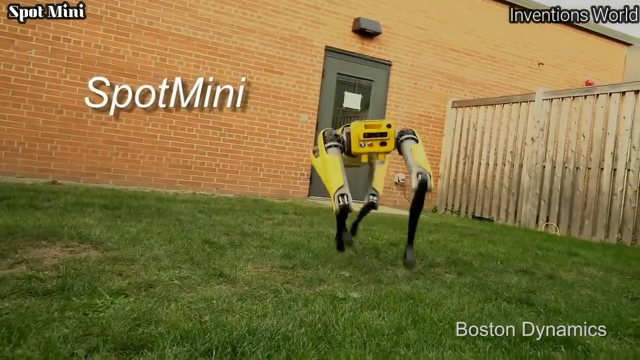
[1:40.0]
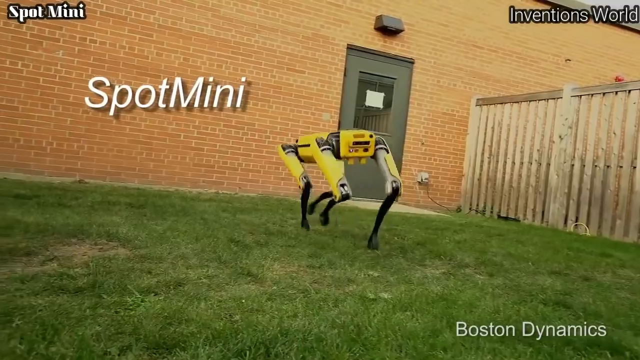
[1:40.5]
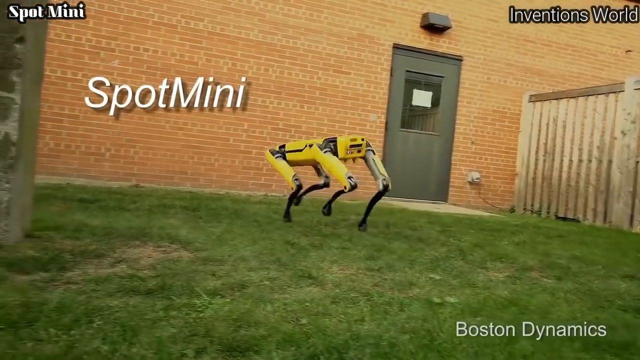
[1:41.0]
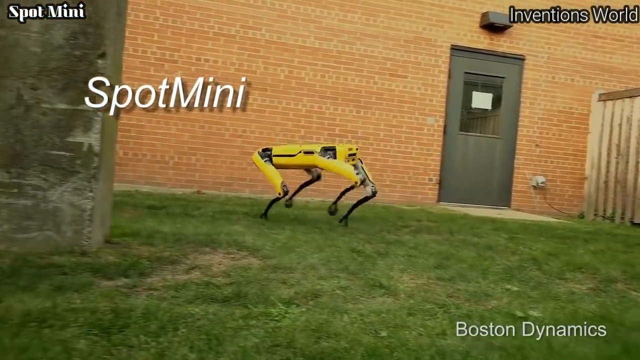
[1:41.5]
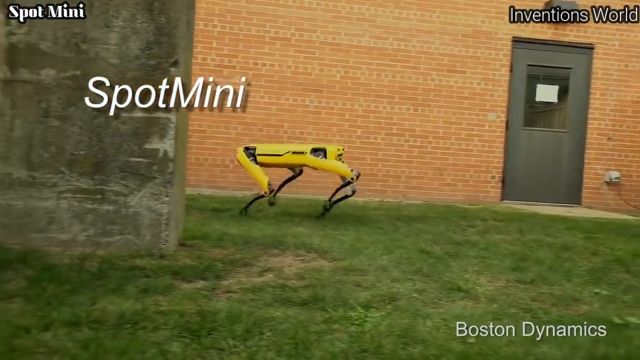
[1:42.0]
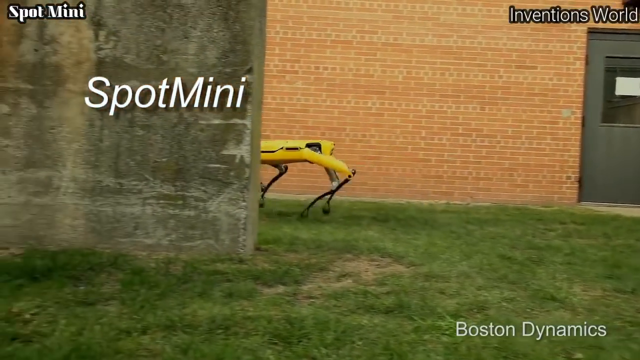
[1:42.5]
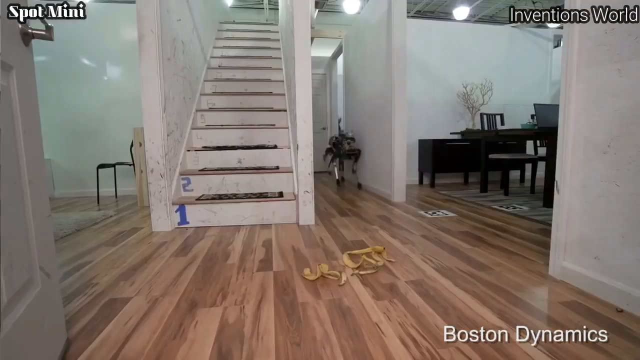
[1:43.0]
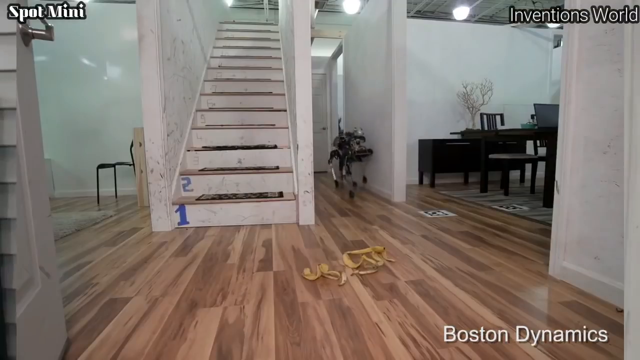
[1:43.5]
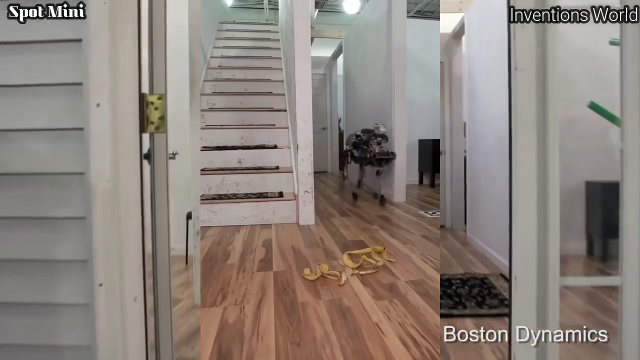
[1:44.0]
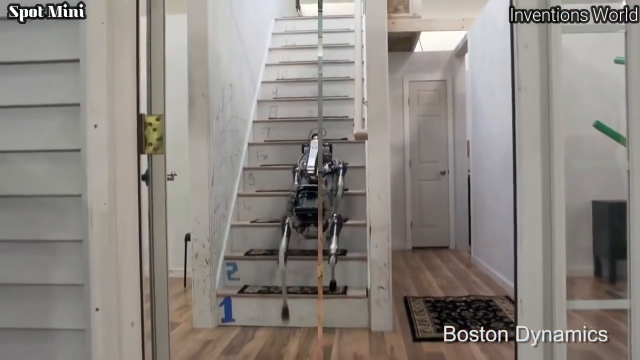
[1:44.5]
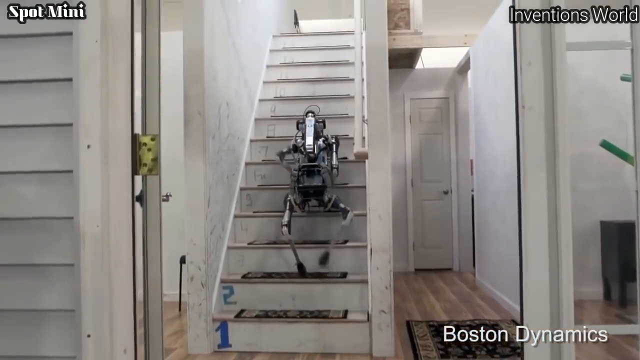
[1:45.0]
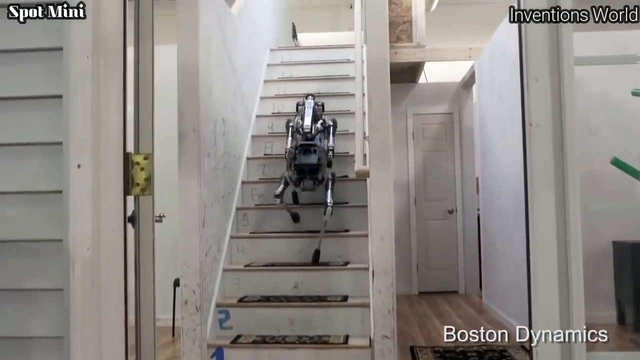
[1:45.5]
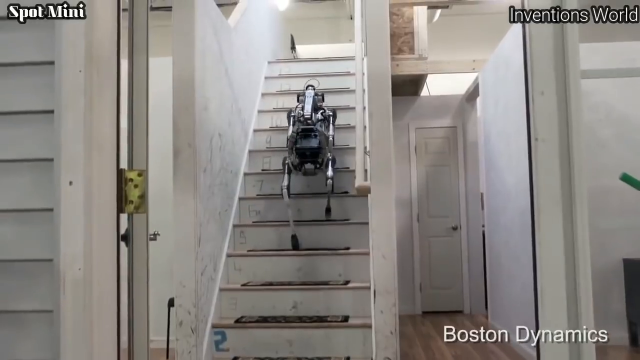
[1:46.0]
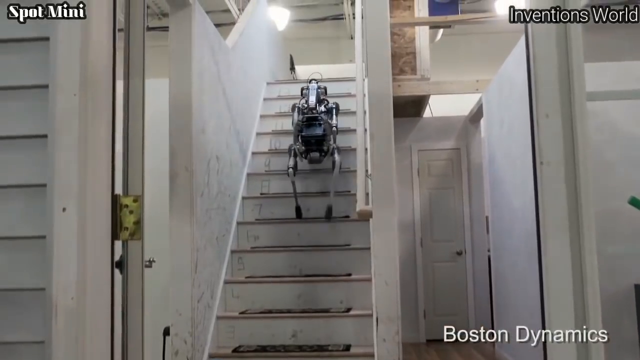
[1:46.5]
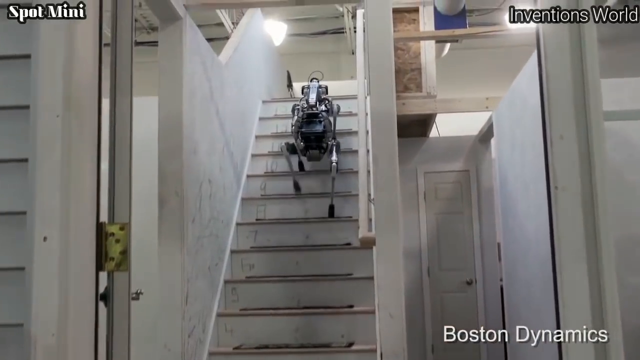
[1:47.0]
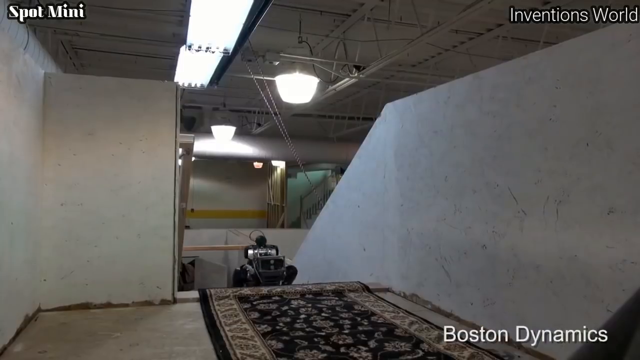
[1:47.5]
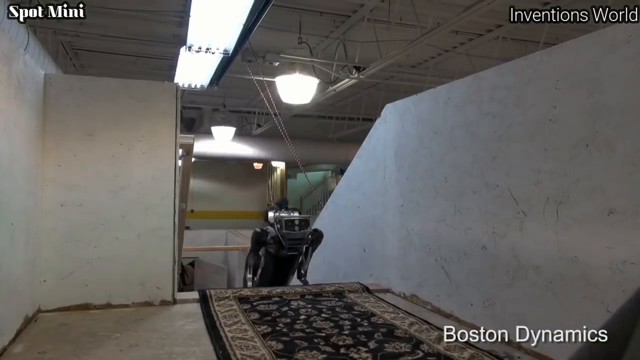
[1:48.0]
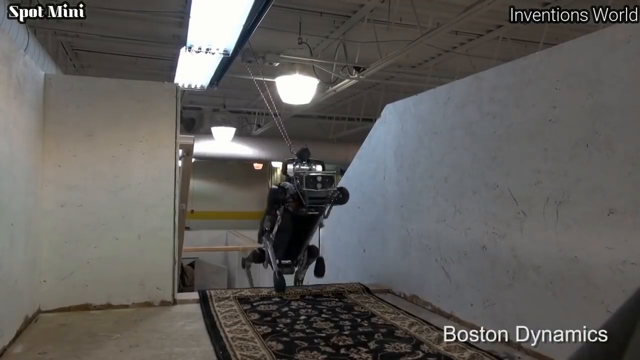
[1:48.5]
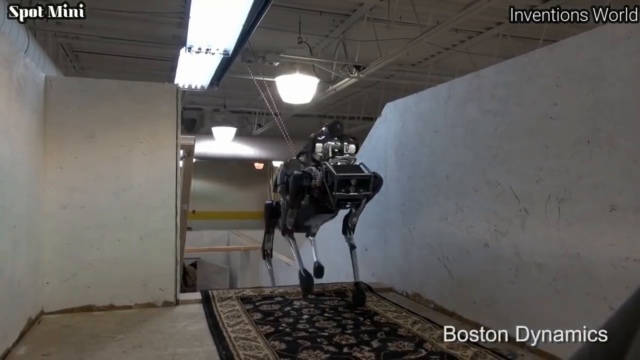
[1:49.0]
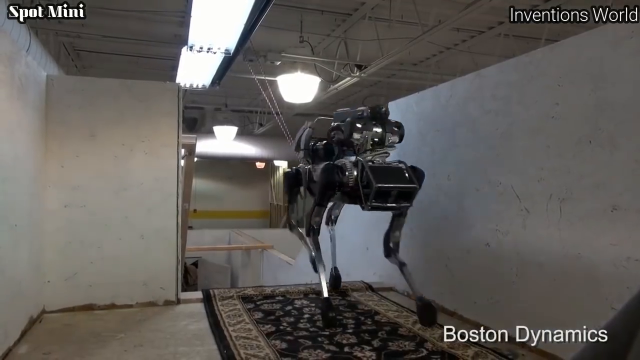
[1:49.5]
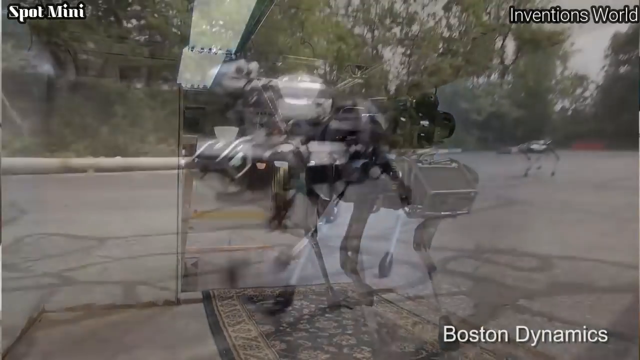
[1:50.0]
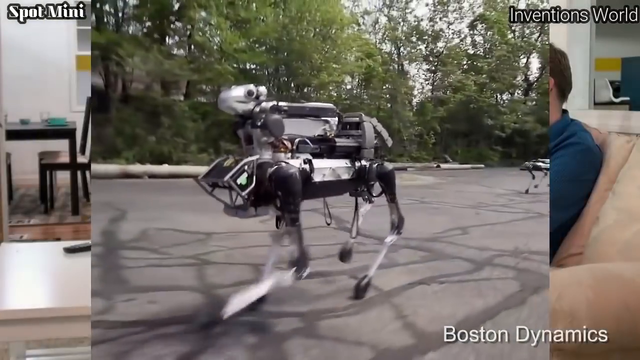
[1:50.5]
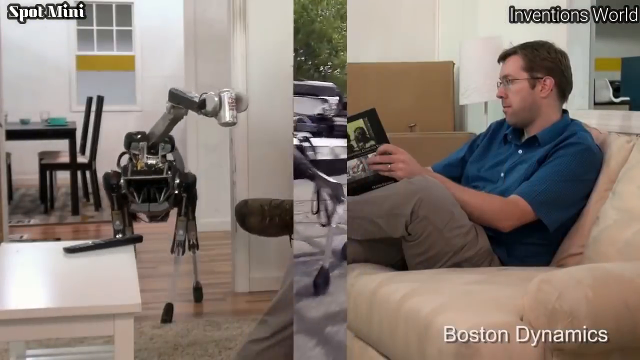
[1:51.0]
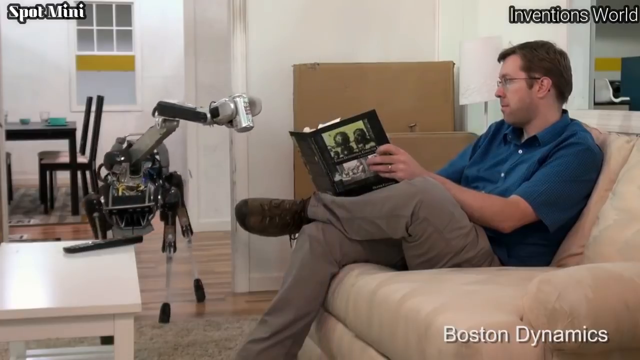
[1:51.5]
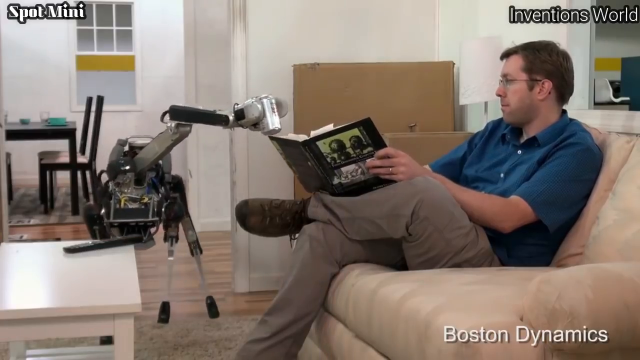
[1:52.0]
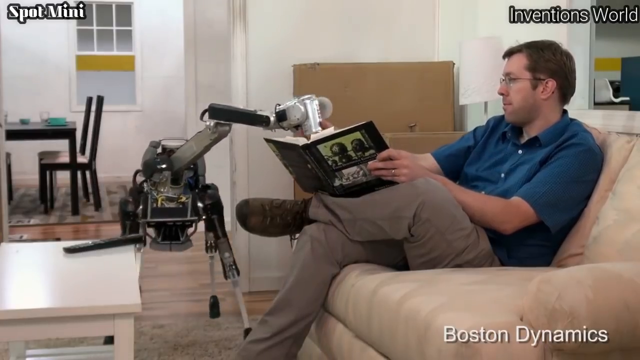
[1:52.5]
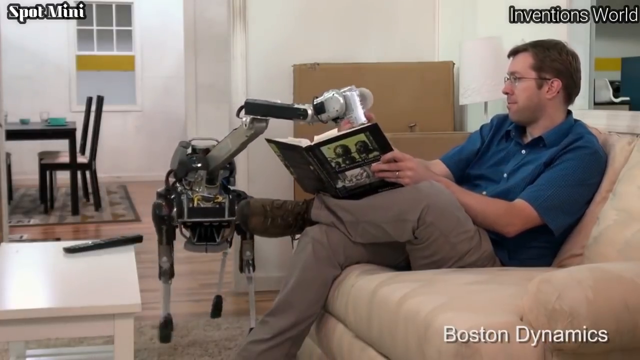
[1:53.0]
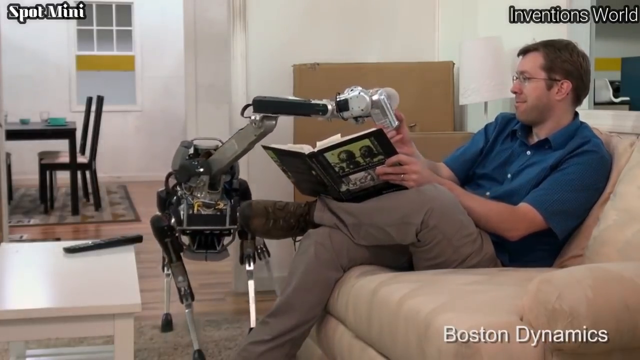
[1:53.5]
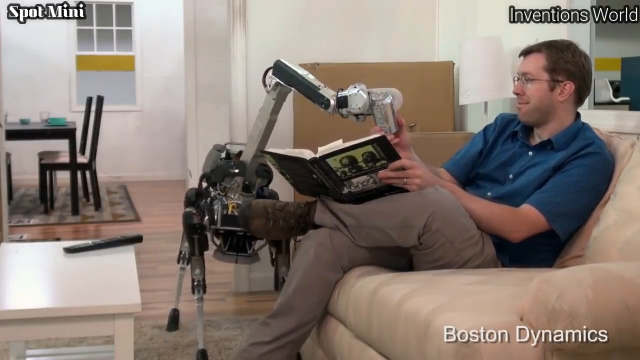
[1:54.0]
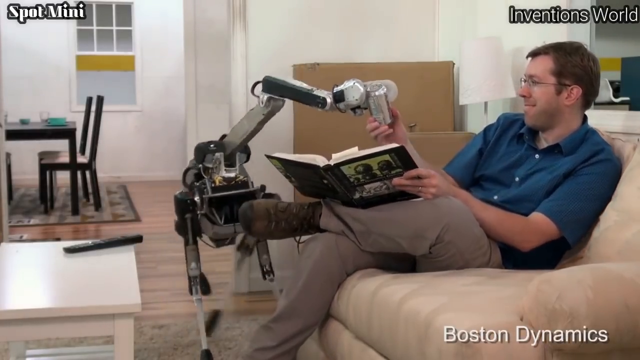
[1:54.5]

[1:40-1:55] The little yellow robot walks back behind the wall, with the text "Spot Mini" on screen. The video moves to the silver robot walking up the stairs in the earlier house, then shows it walking across the street. The silver robot is then in a room with a man in a blue shirt and gray pants, kind of jostling him with its head while he grabs its head and holds it back a little. It hands him what looks like a can of soda and plays with him, trying to drag the soda away while he kind of grins at it. He is reading a book with fairly large pictures in it. He starts to laugh as the robot kind of jostles him around the couch. There is a little coffee table in front of him and brown cardboard boxes behind him.